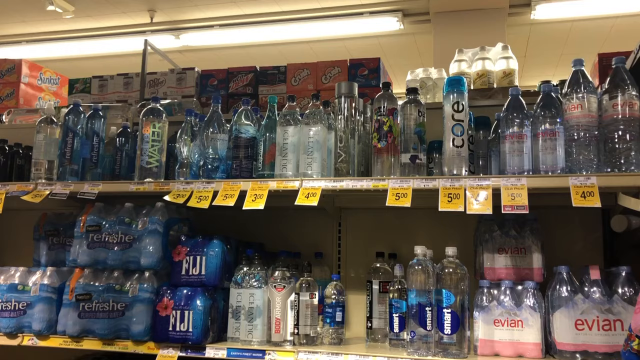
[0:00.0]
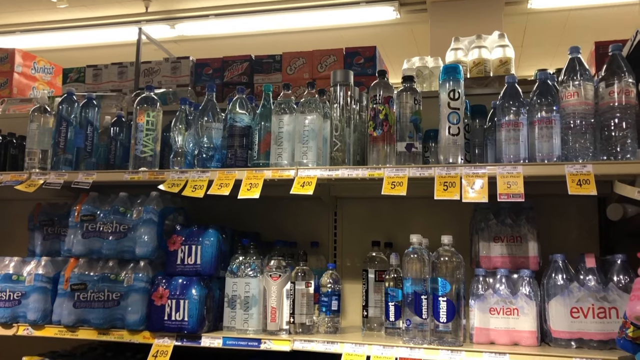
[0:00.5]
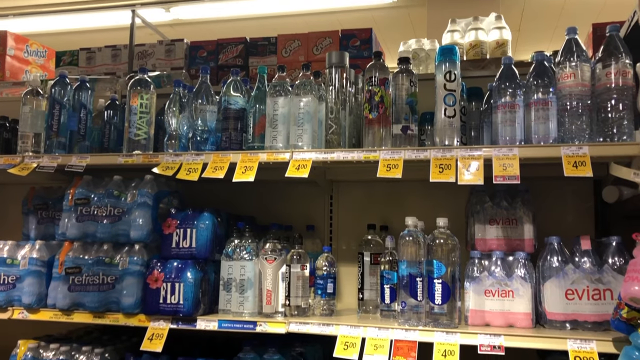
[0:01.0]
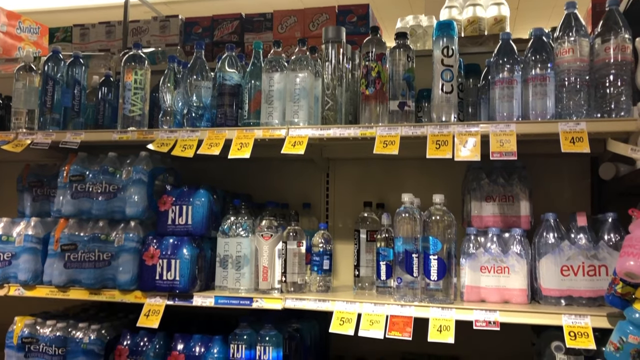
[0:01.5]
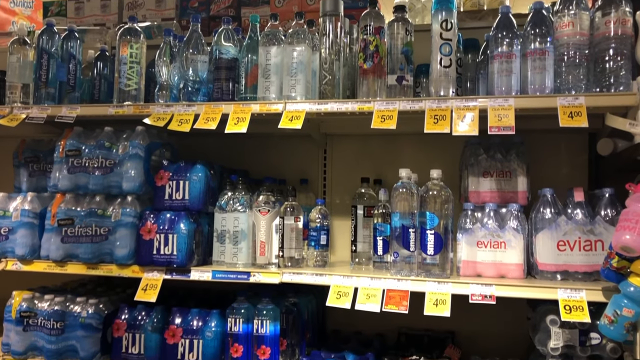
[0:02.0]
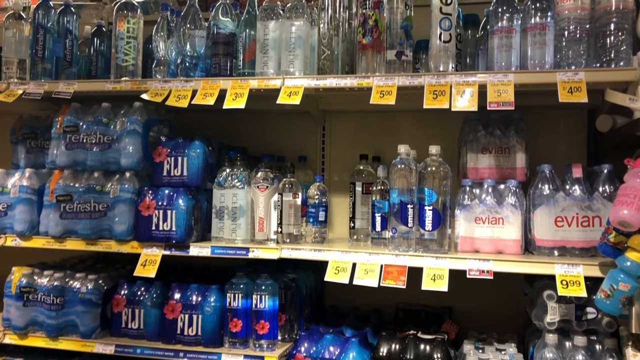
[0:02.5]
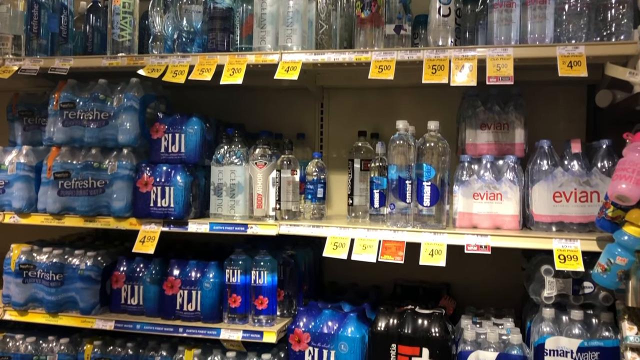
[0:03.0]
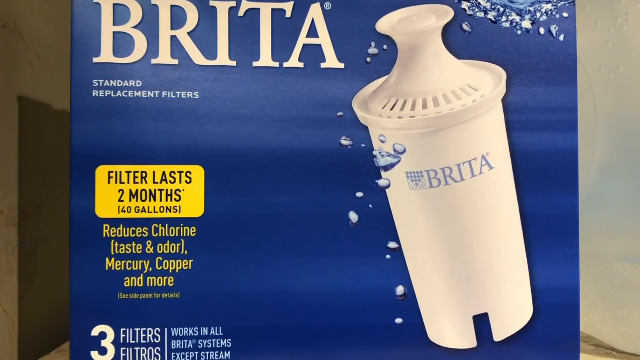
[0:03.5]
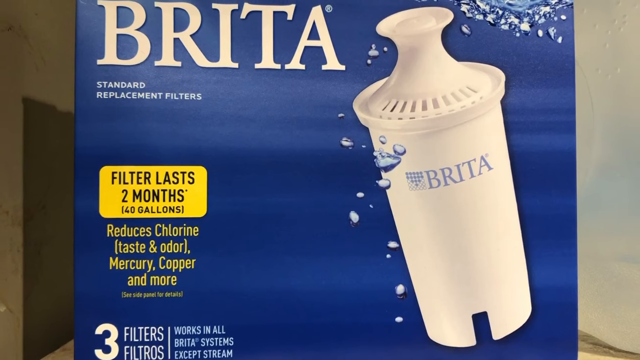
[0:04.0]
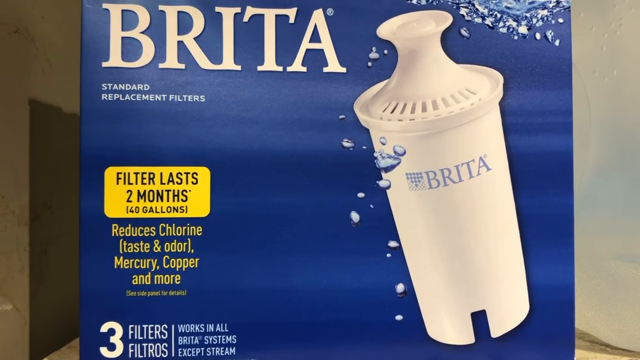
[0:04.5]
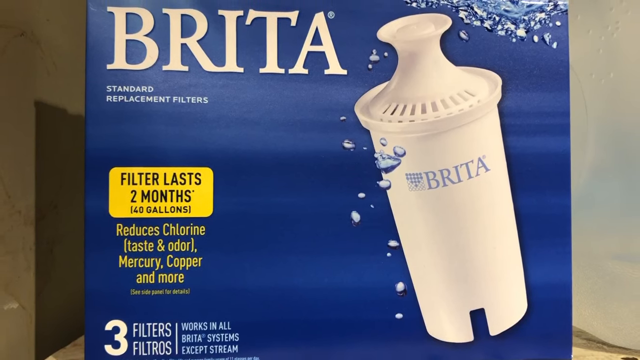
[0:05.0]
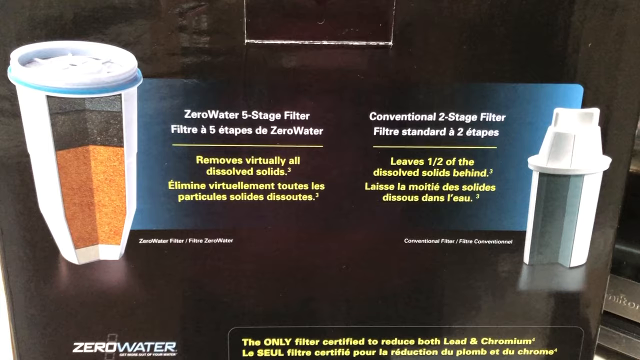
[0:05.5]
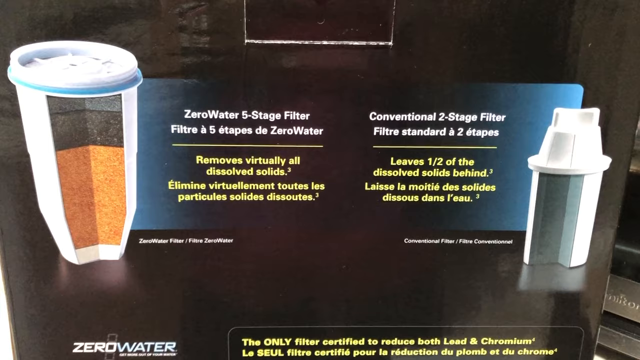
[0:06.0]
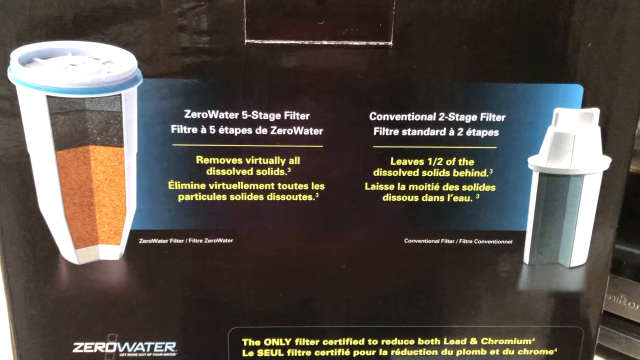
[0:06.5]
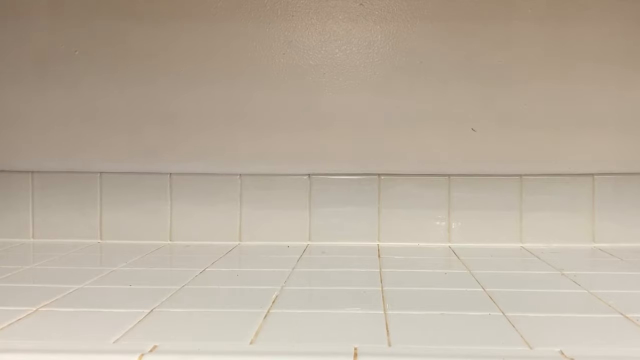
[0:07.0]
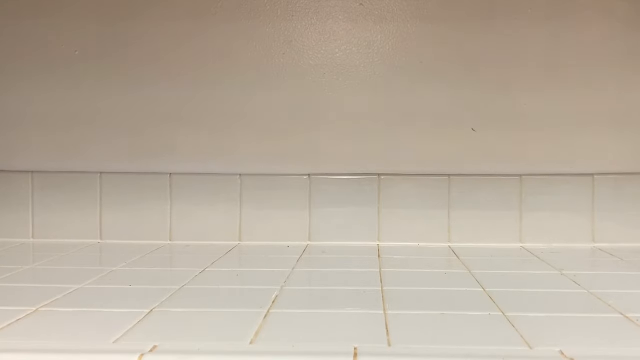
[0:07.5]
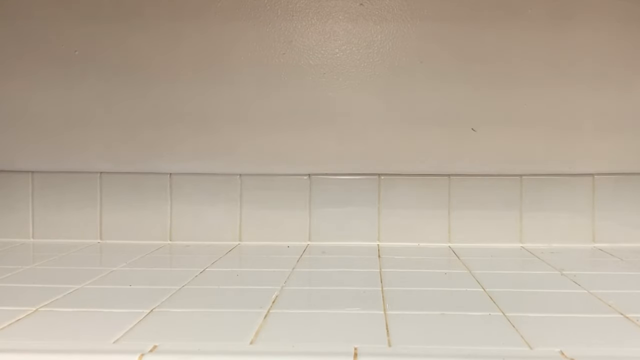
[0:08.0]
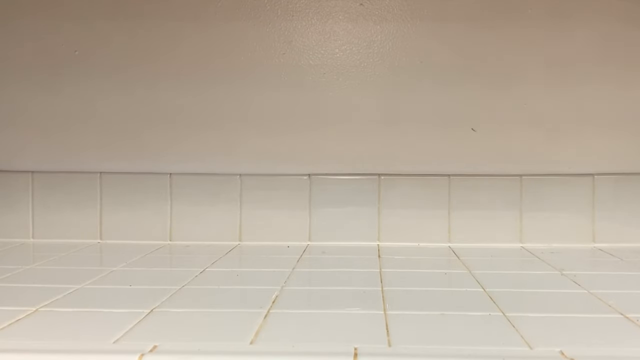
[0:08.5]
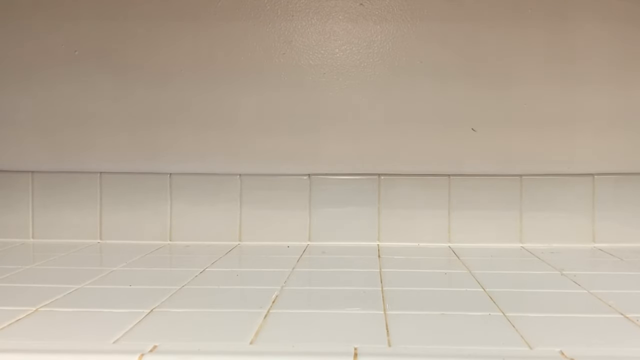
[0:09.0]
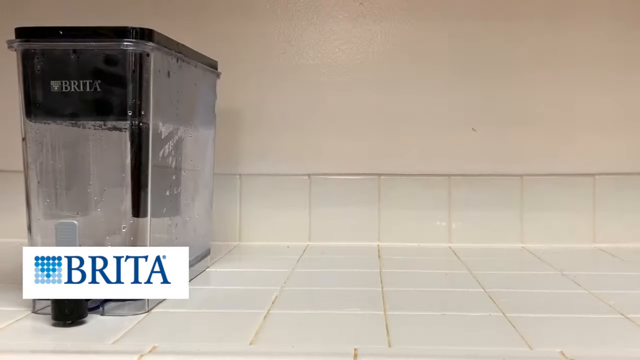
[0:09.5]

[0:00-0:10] Many waters are on the top shelf at a store, with drinks hanging in the back on a different shelf. There are 13 different brands on the top shelf, with three different types of brands and packaging. In the middle are different brands, from Iceland to an unknown brand, Body Armor and Smart Water. On the lower shelf are different packagings of Fiji Water and Refresher. There seems to be a Brita water purifier with a breakdown of what is in the filter to filter the water. Lastly, someone sets up a Brita on a counter.